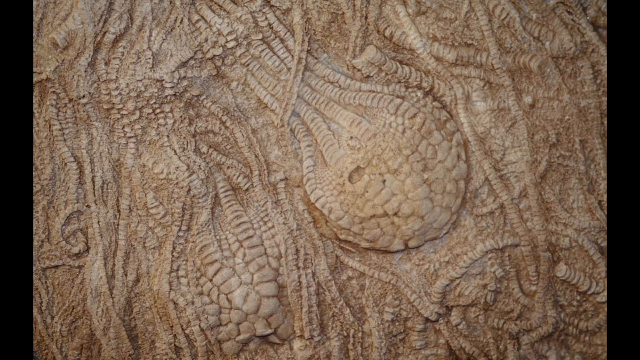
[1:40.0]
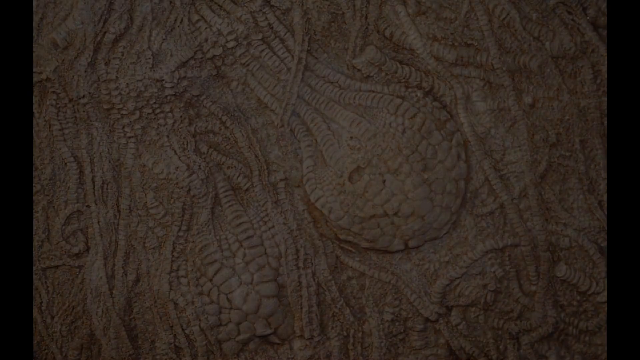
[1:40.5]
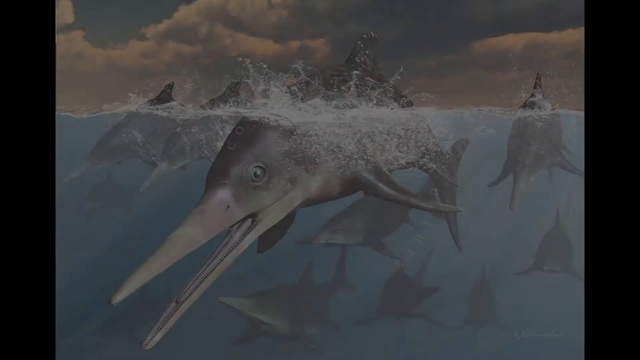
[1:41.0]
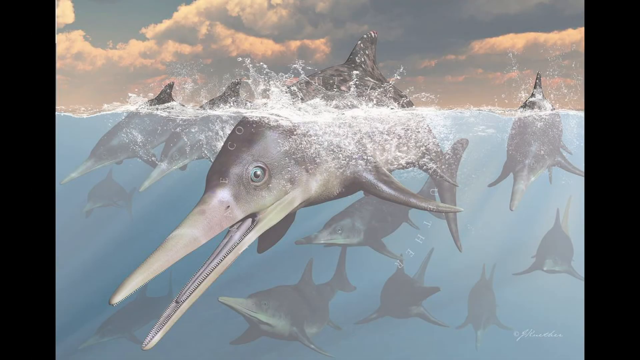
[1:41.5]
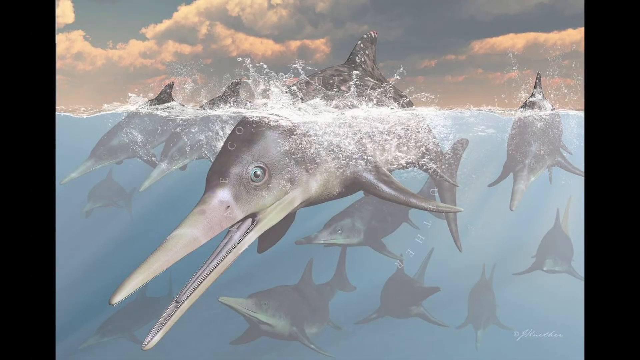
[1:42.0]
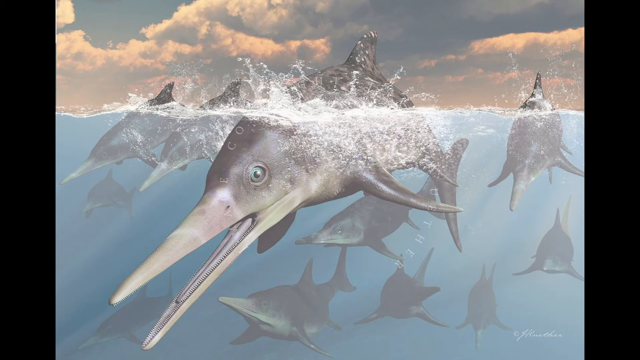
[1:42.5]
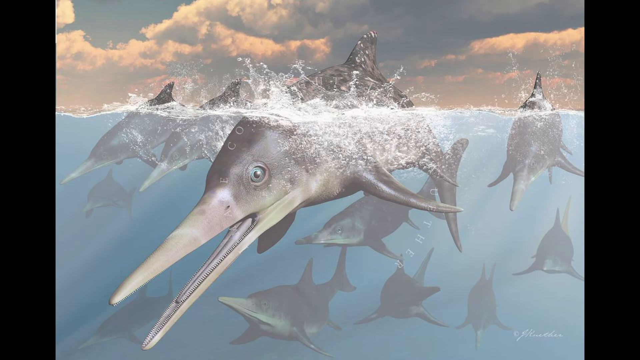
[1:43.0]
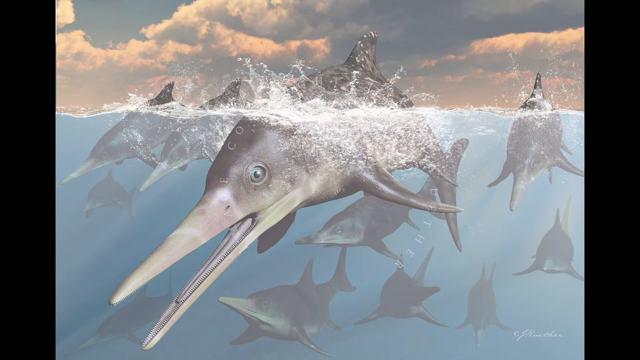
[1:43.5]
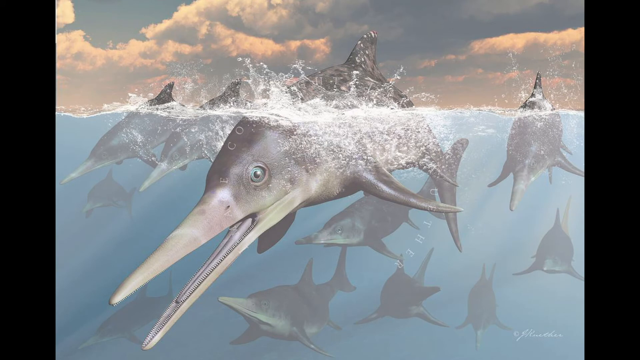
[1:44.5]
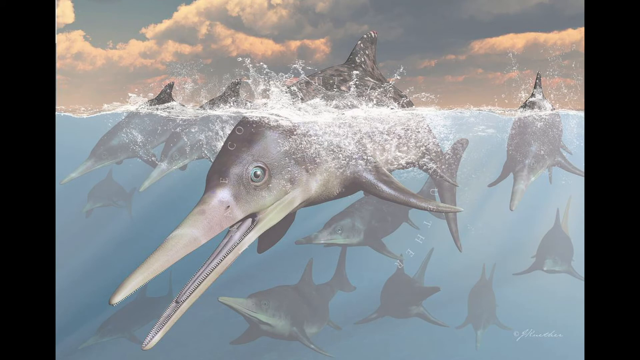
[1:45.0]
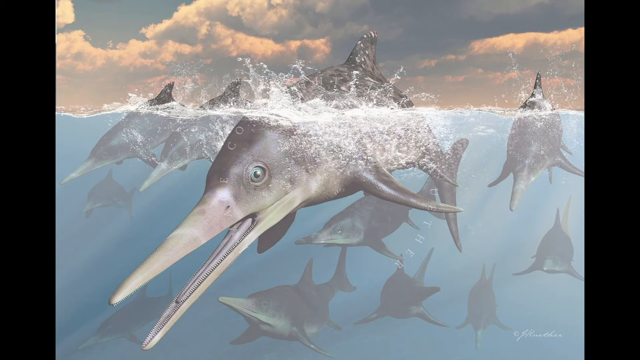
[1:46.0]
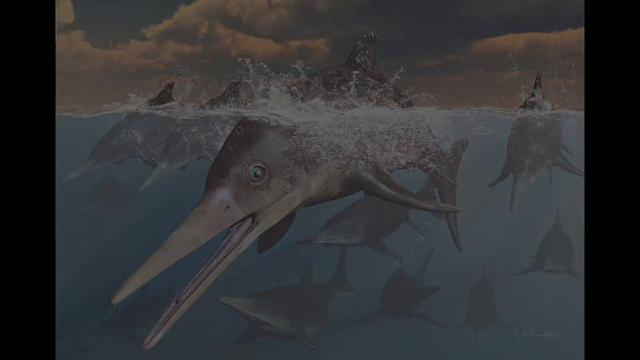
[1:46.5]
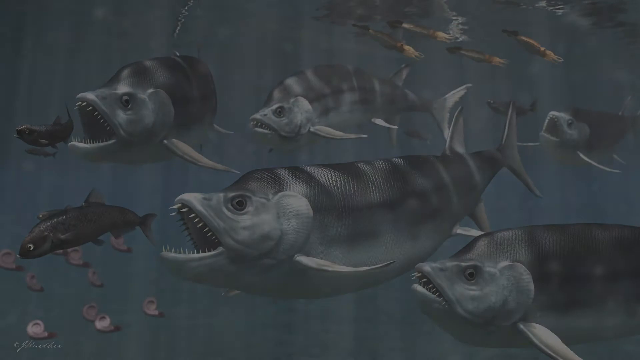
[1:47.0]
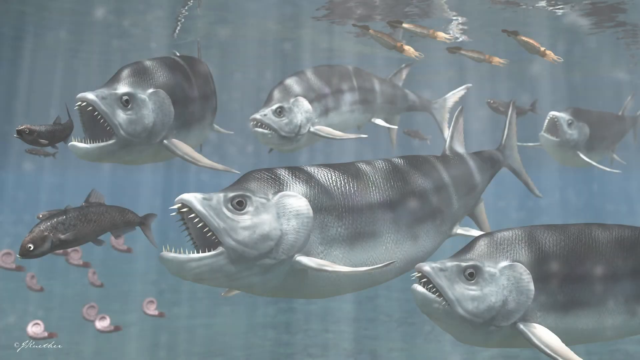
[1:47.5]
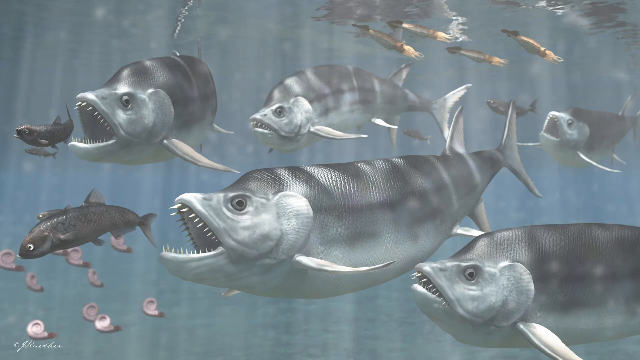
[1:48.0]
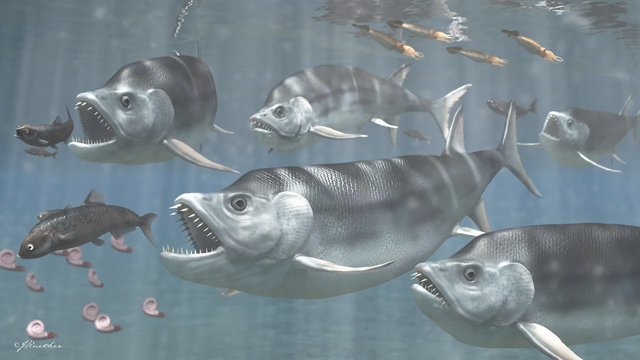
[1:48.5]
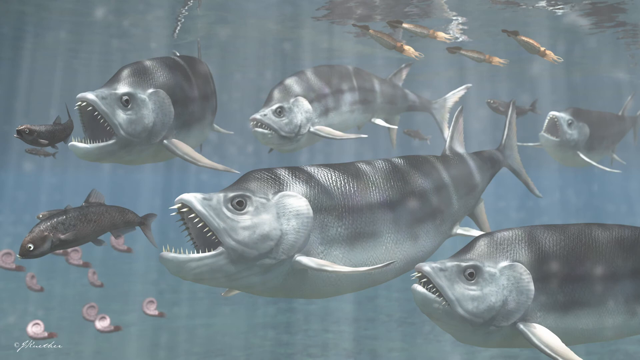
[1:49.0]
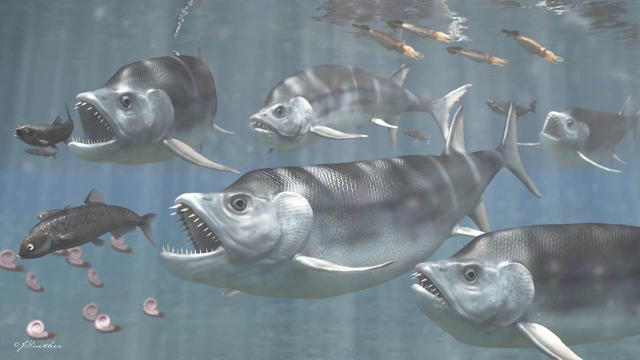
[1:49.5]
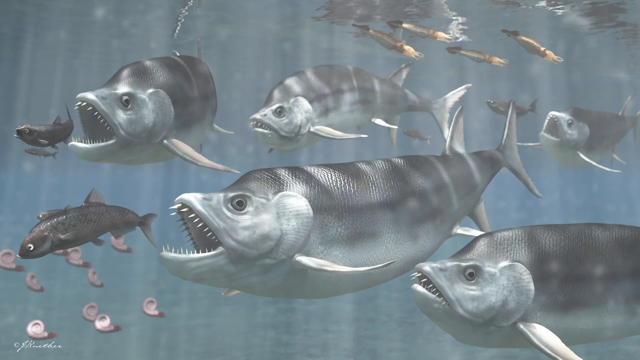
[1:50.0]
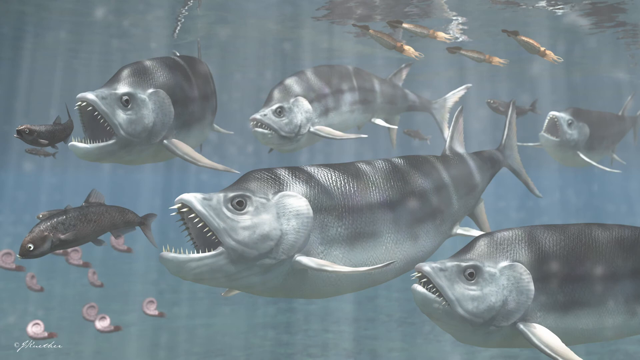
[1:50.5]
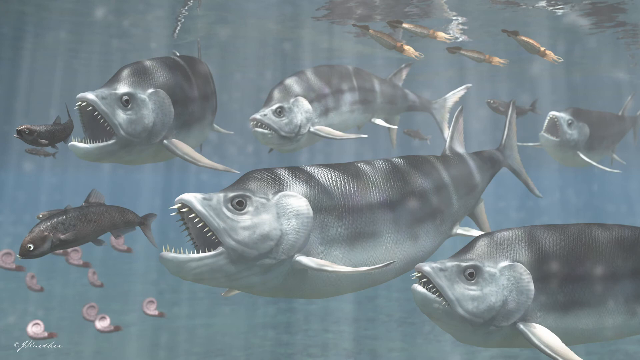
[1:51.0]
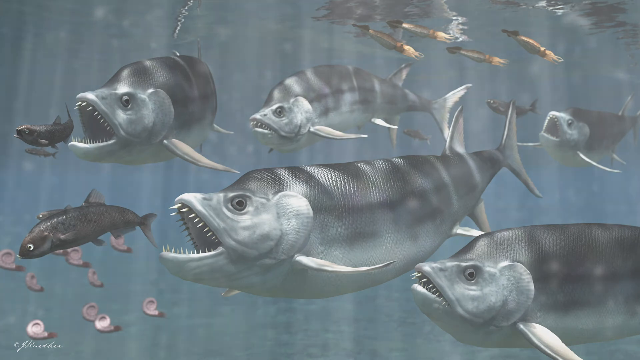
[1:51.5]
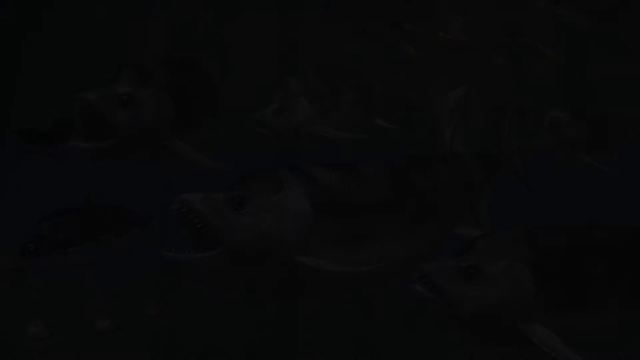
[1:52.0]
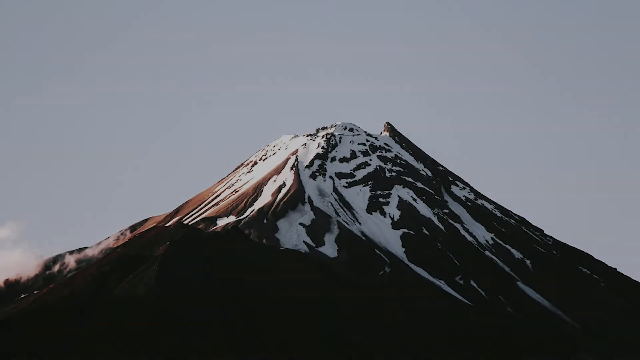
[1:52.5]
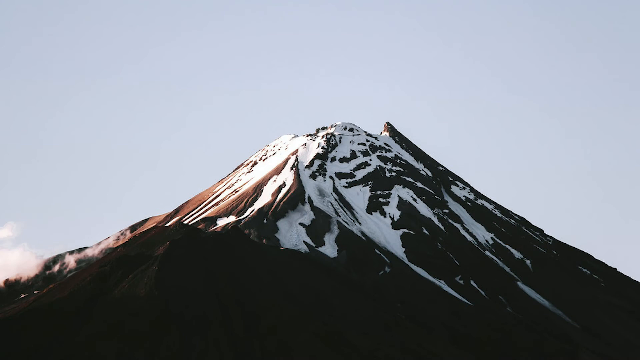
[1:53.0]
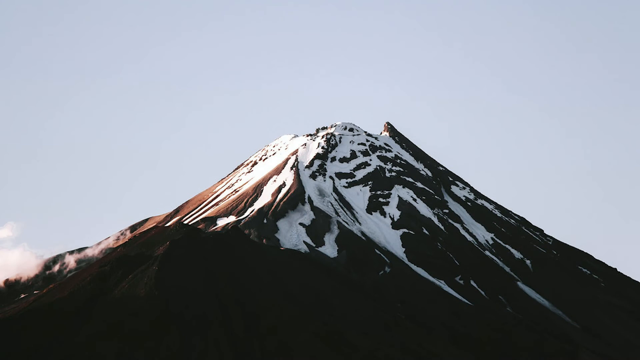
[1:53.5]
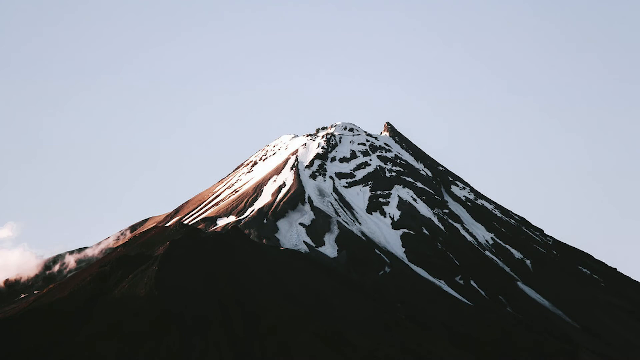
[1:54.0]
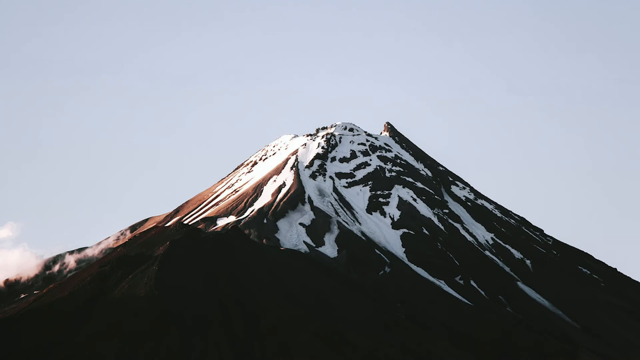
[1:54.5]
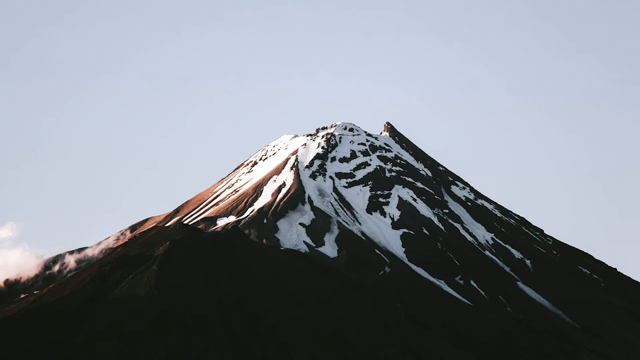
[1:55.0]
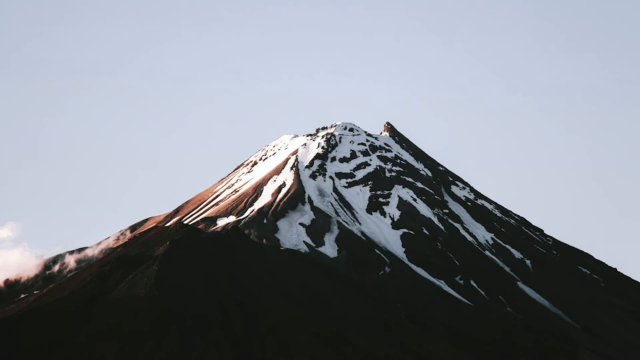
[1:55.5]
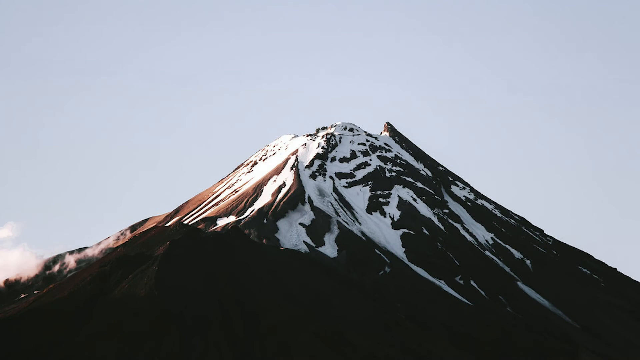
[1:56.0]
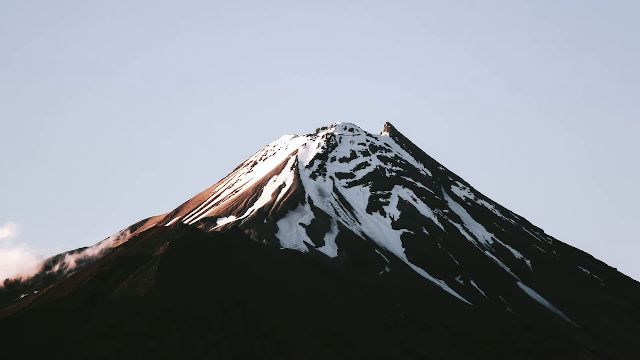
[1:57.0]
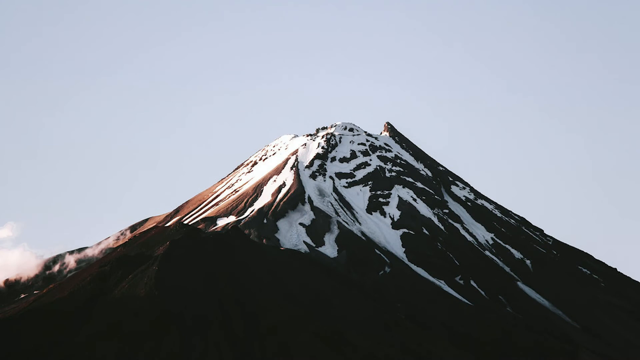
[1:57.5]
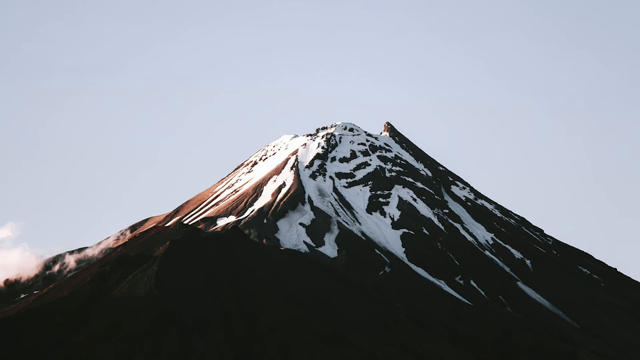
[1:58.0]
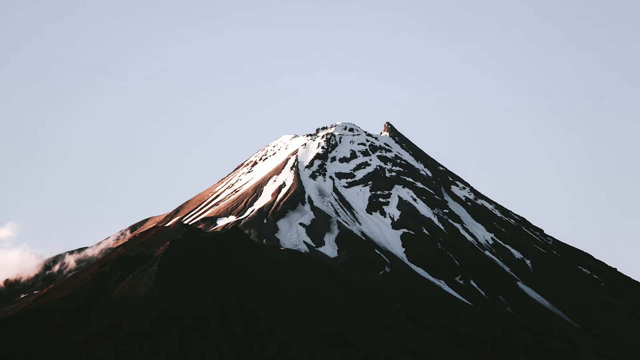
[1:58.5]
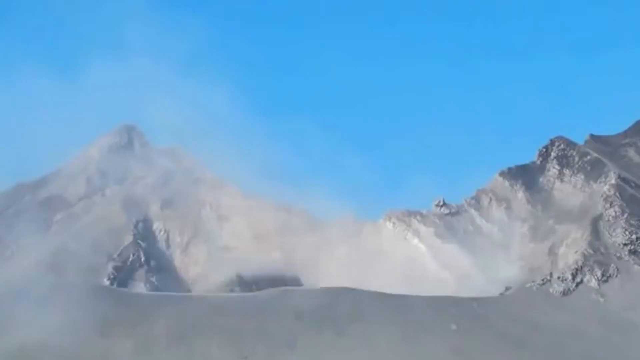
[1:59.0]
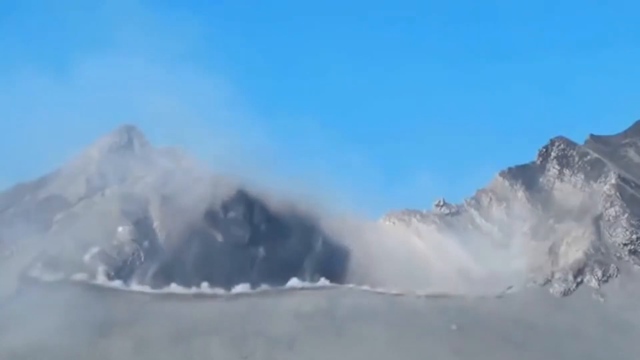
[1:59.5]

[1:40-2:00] A brown and white rock shows what appear to be fossils or some sort of engraving. Slightly to the right of the middle is a circular ball with its head going to the right. Tentacles come out of its top left: five tentacles go toward the top center of the image, a little to the left. They have no unique design but are very close together, as if bundled up, forming a single column, and each has little horizontal lines cut across it. Surrounding this shape are more tentacles, equally bunched together, but no more circular heads, just tentacles snaking through. Most are vertical, but some move more horizontally on the right, such as one coming from the top down and cutting around to the right about a fourth of the way down, with a similar one on the bottom fourth. The view switches to prehistoric dolphins with a dolphin-like shape: sleek bodies, dorsal fins on top, and round heads. They are breaching the water. Their snouts are extra pointy, probably double or triple the length of a dolphin's, and they seem to have many more teeth than a dolphin, small teeth lining the mouth throughout. There are 10 in view; the closest one takes up most of the view and is the only one whose eye is visible, a bluish circle with a black iris in the middle.